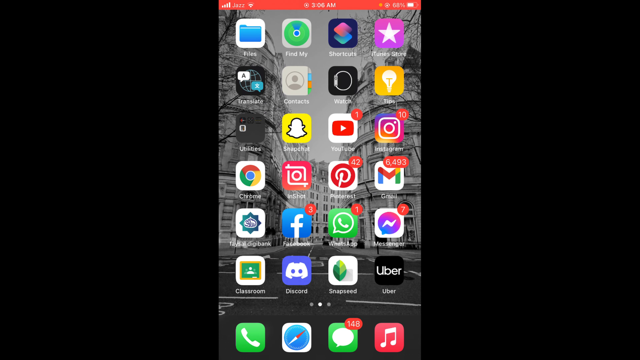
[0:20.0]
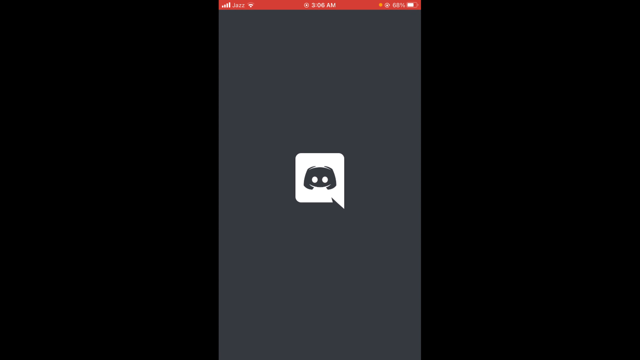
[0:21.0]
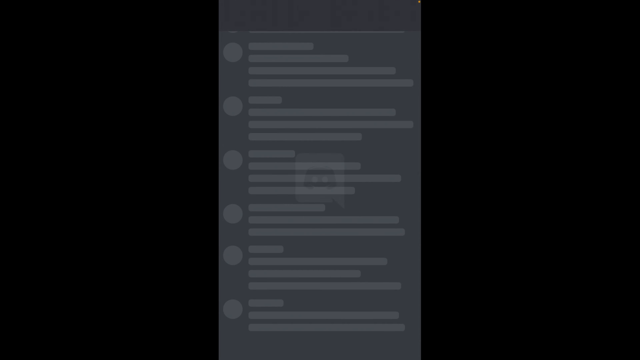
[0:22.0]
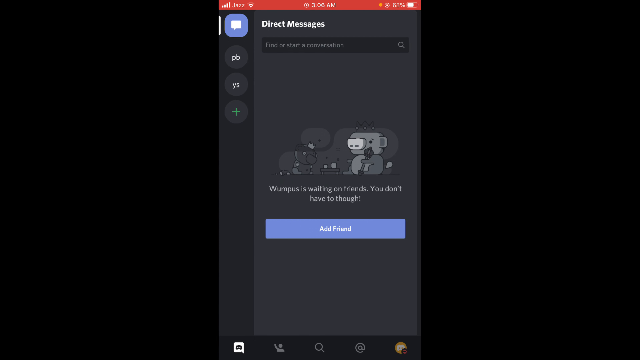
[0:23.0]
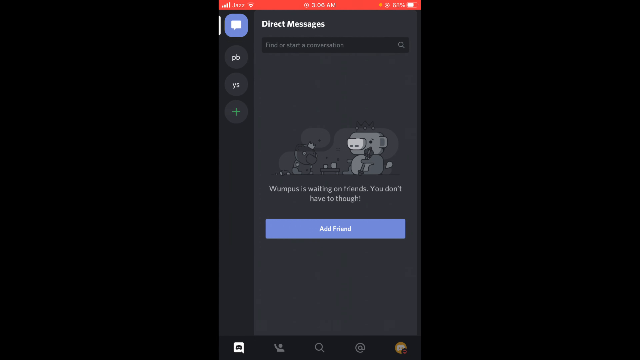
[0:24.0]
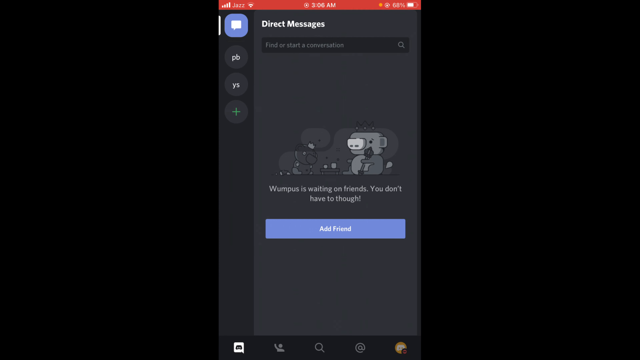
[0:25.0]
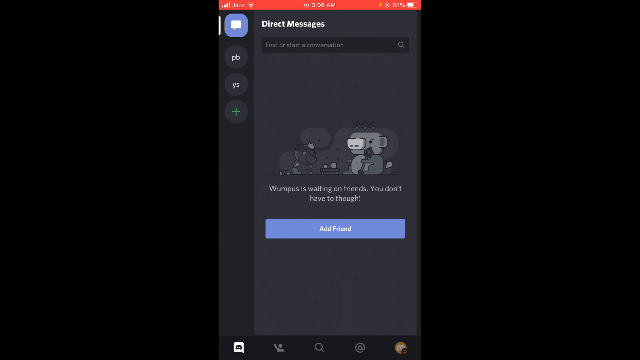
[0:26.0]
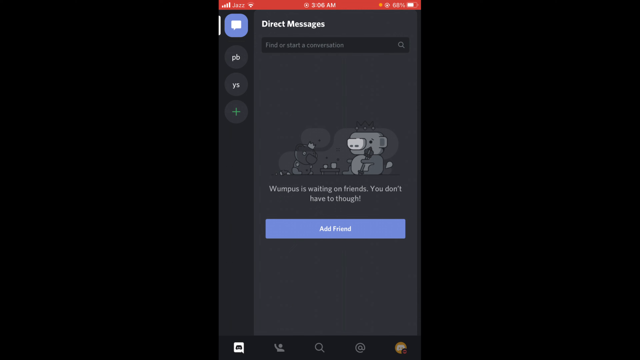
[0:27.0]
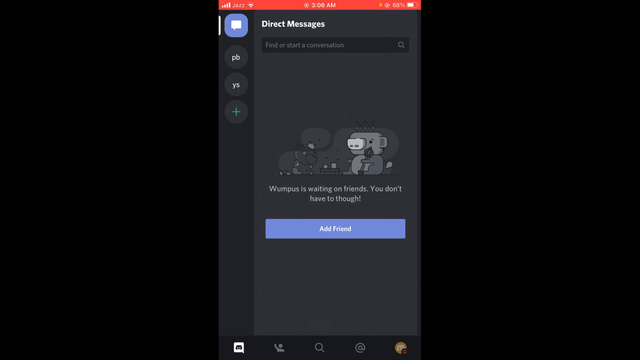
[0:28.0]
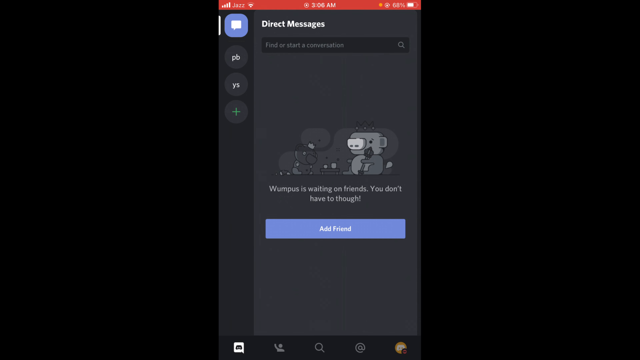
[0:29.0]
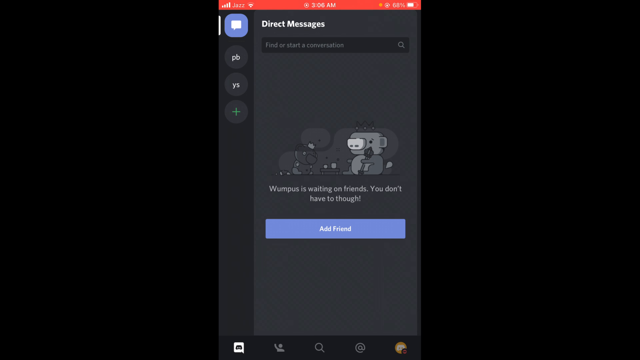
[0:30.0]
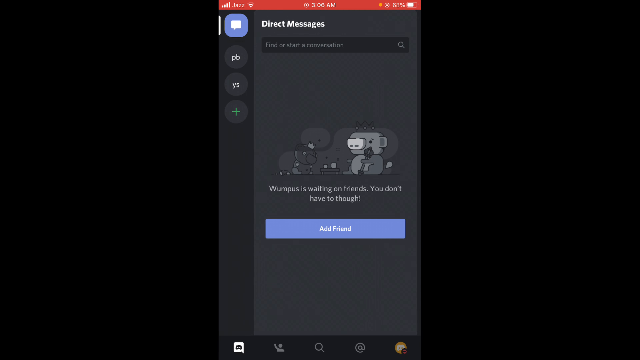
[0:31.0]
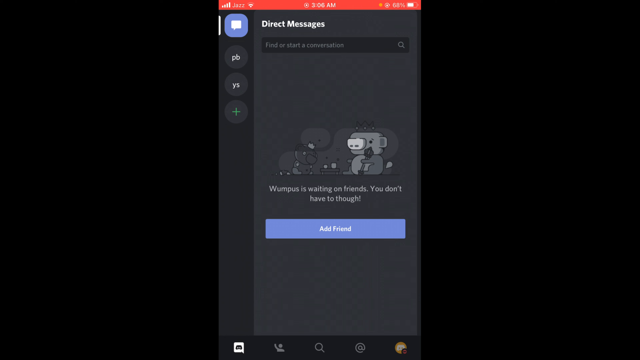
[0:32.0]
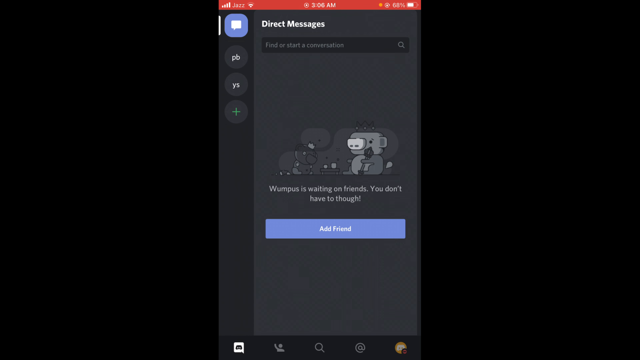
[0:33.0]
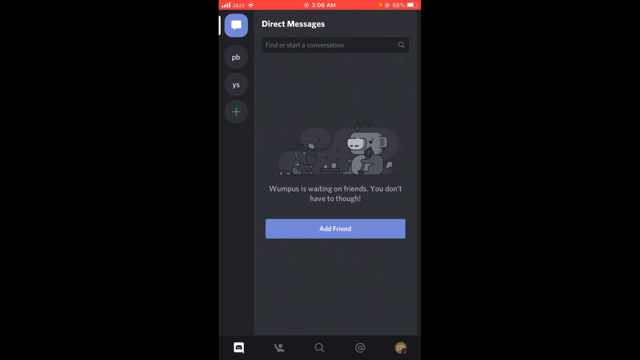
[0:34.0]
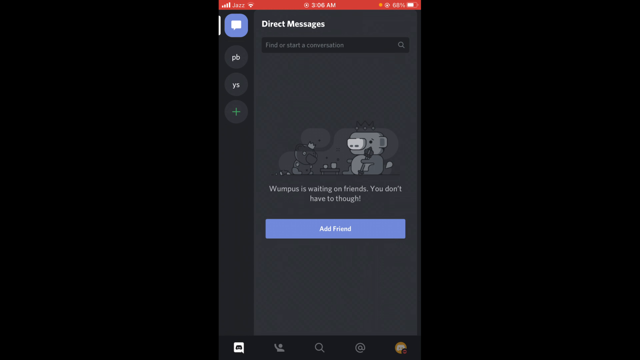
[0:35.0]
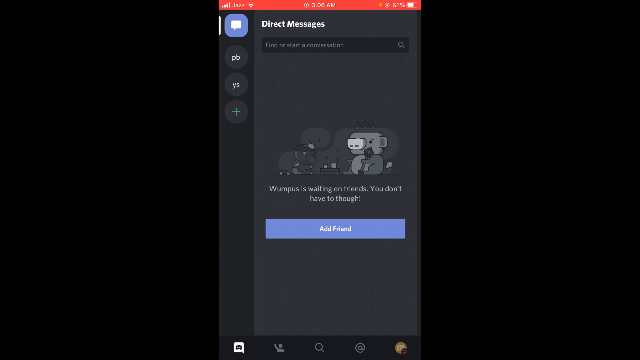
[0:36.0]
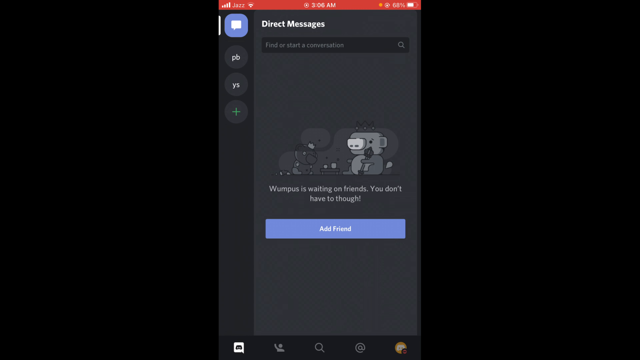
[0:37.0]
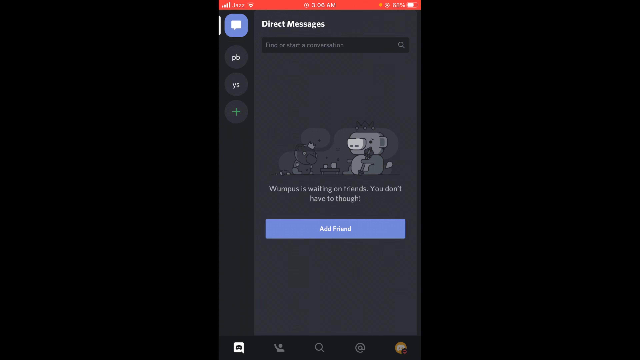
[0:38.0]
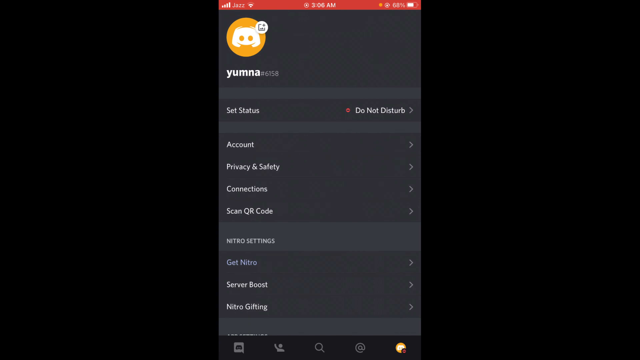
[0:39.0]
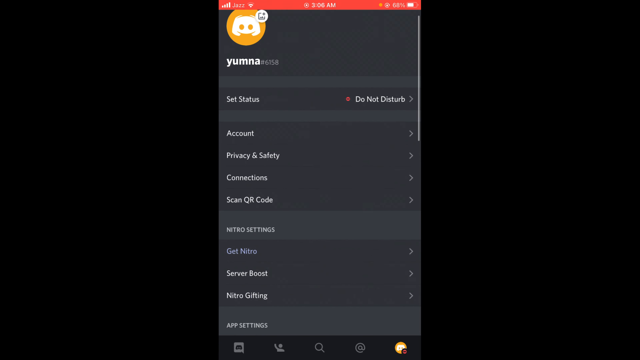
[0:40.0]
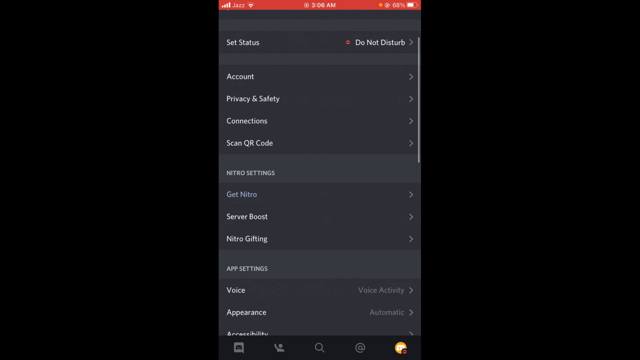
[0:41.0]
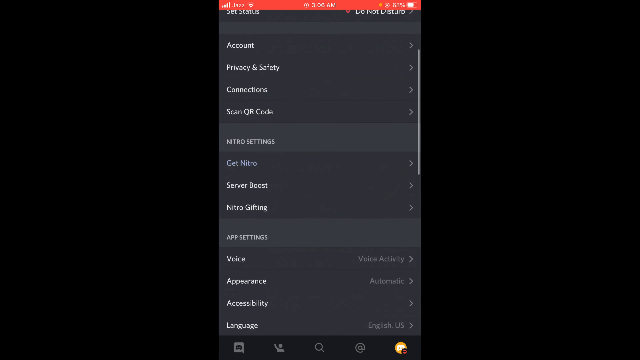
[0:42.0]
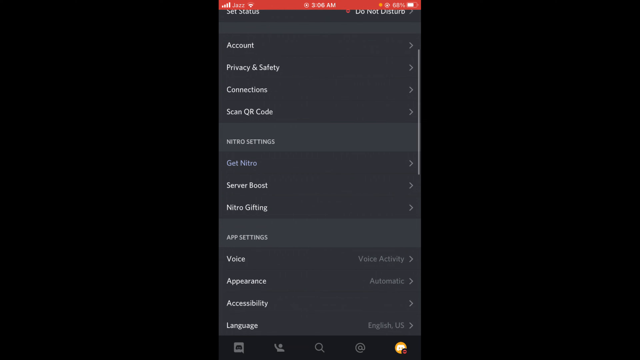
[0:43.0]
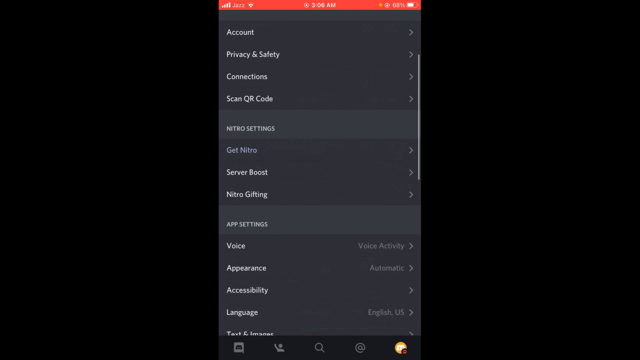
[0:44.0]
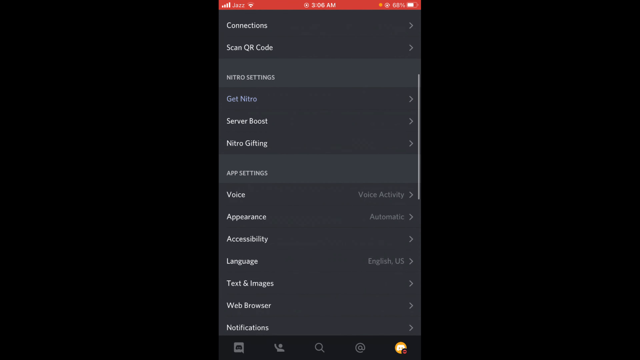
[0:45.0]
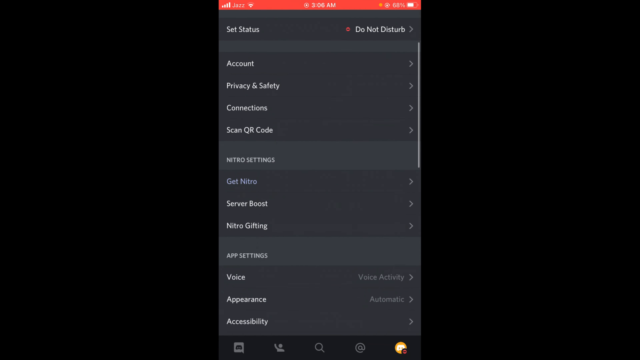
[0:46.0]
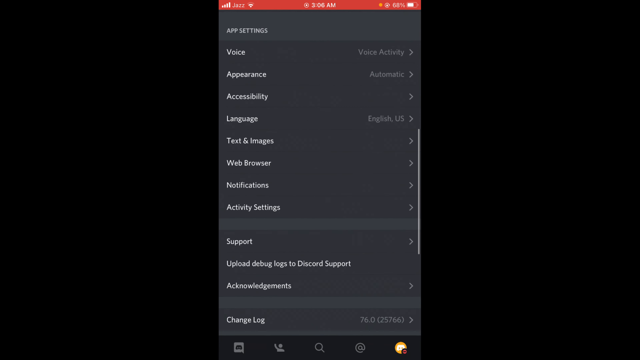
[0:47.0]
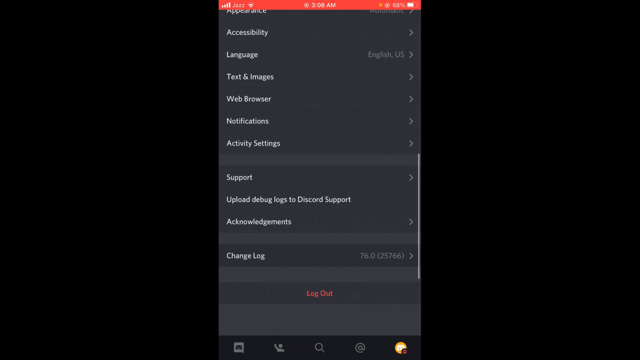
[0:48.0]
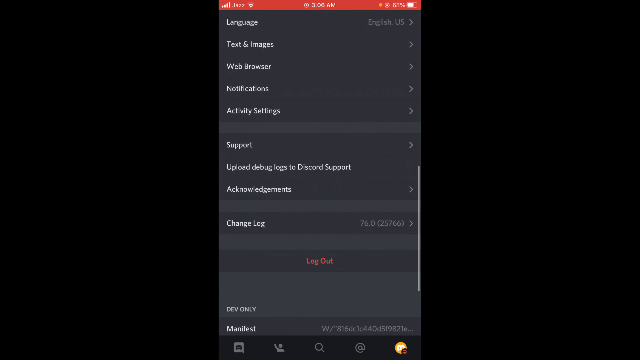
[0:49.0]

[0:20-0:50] The Discord icon is tapped, and Discord opens as the screen loads. The direct message screen appears, listing Discord users, with the user Iuma using the app.